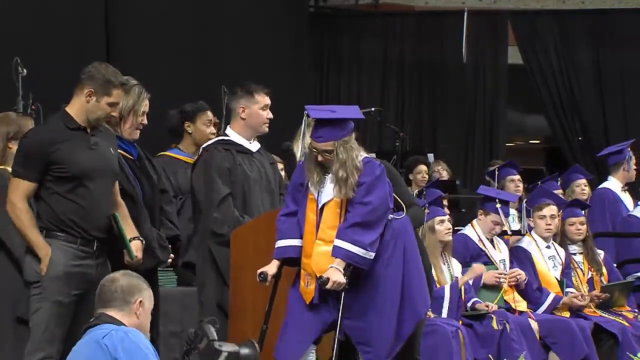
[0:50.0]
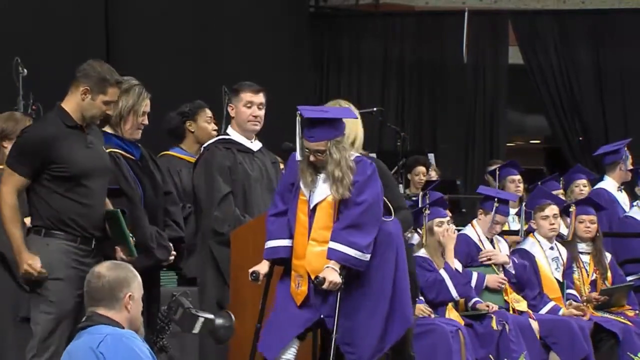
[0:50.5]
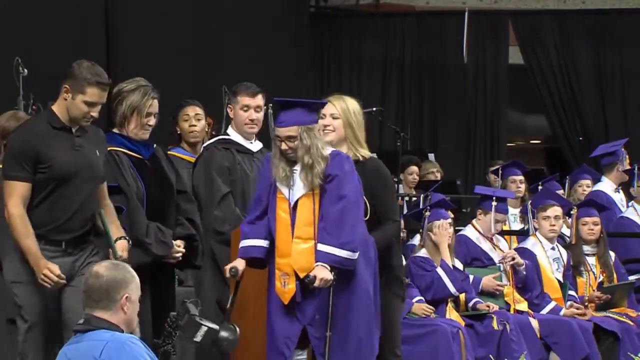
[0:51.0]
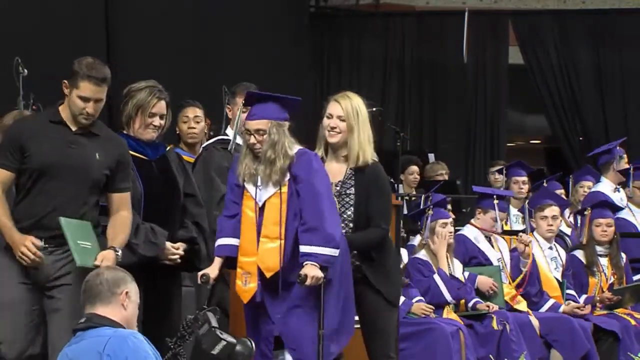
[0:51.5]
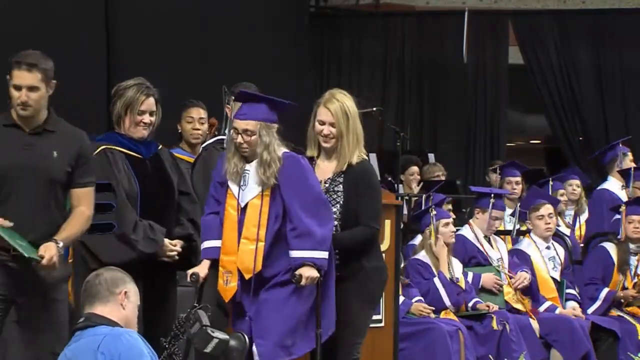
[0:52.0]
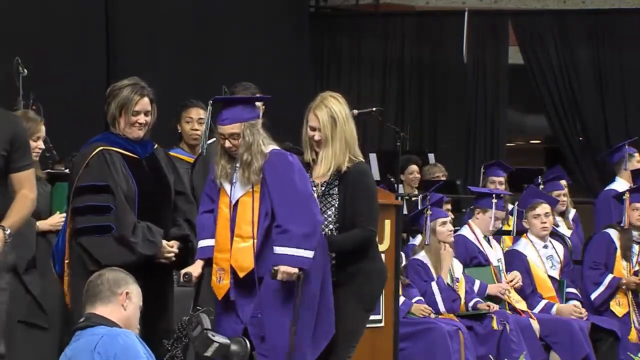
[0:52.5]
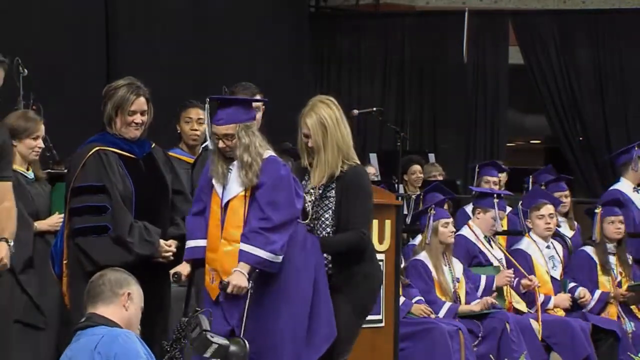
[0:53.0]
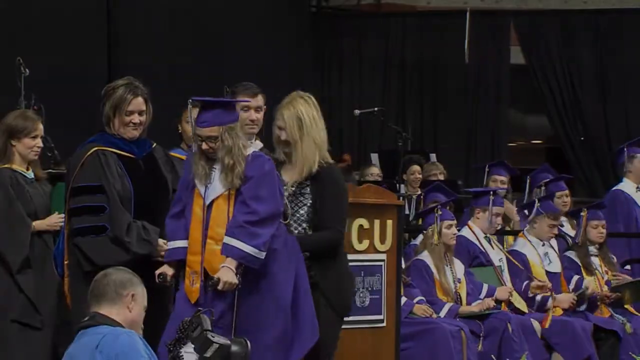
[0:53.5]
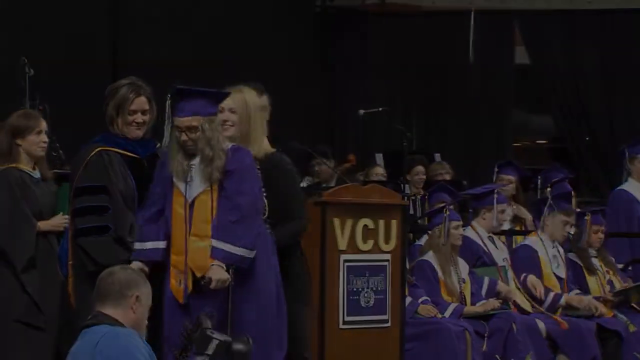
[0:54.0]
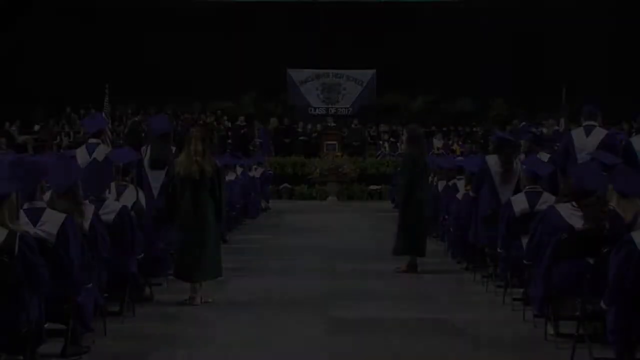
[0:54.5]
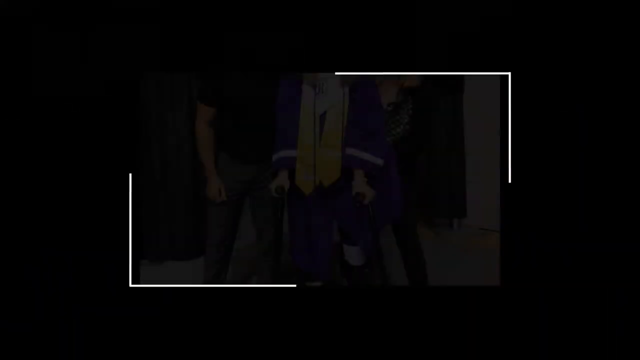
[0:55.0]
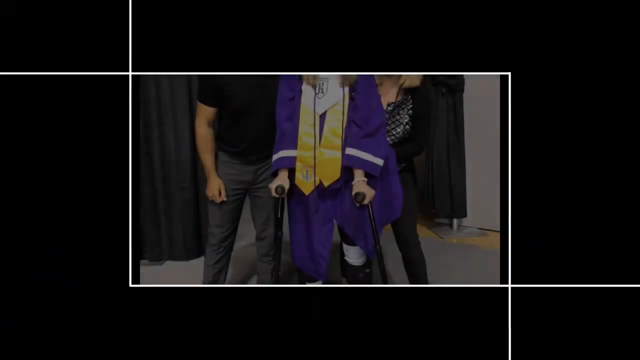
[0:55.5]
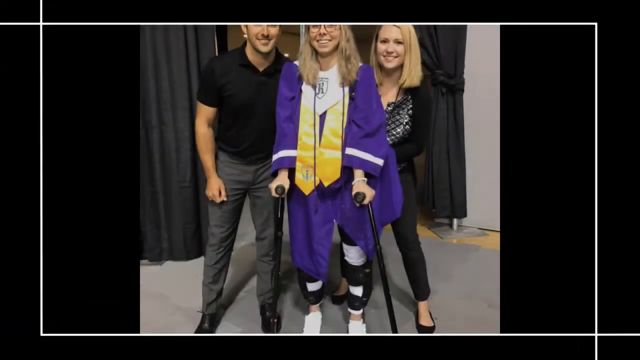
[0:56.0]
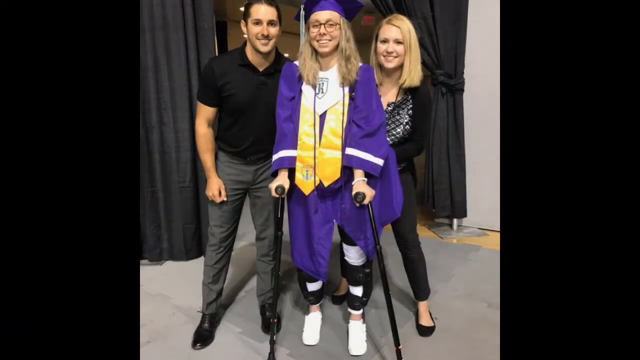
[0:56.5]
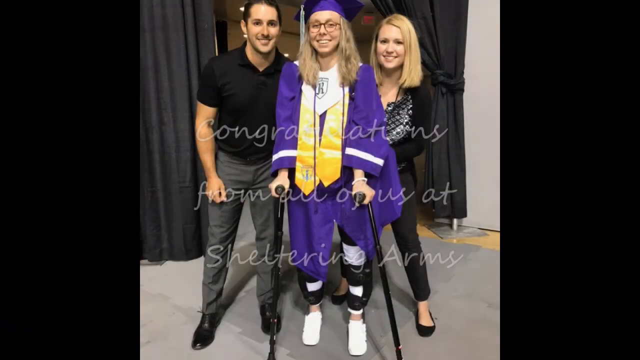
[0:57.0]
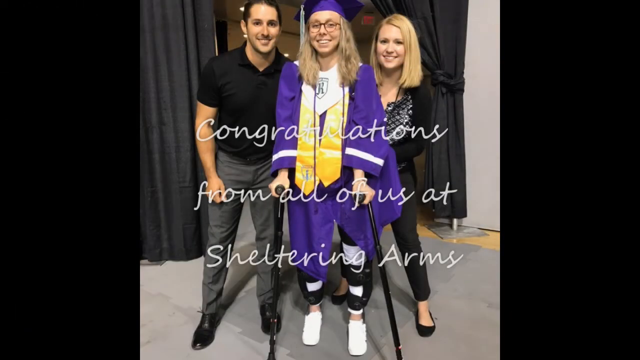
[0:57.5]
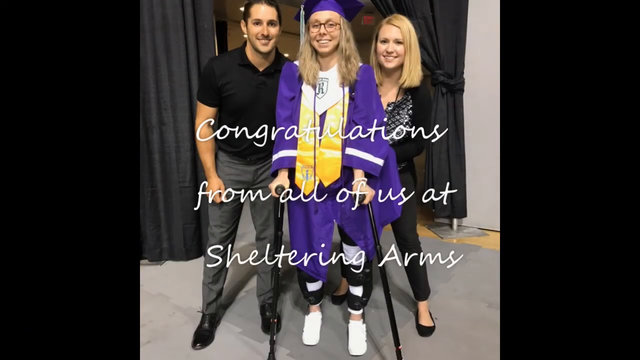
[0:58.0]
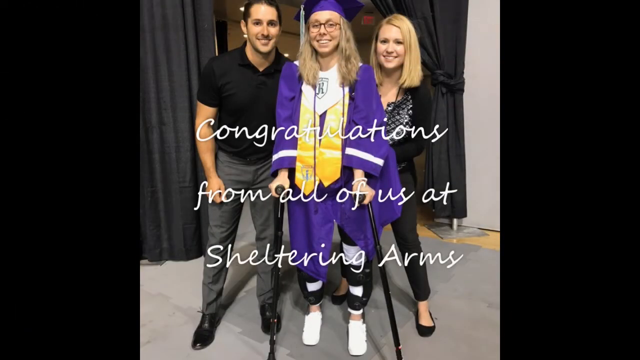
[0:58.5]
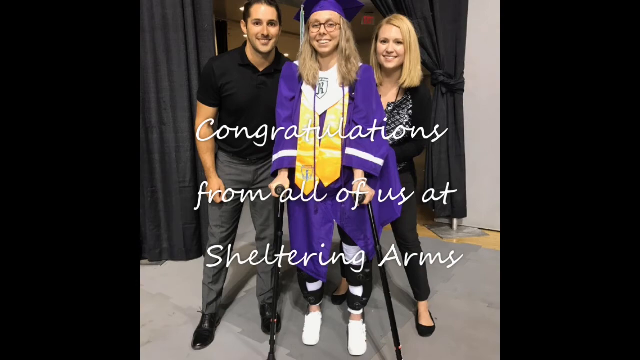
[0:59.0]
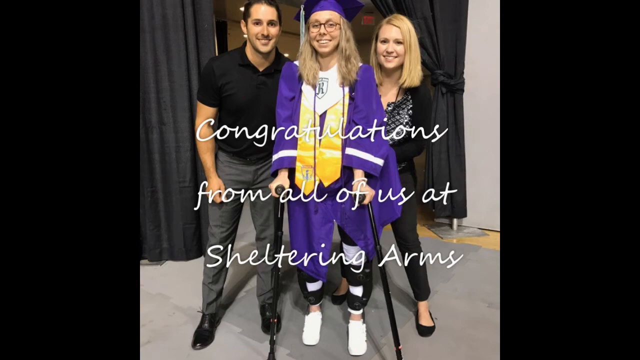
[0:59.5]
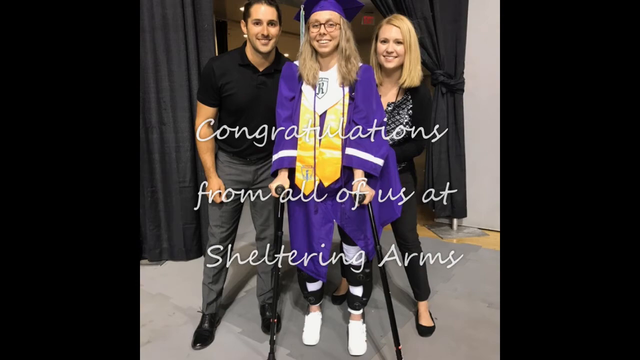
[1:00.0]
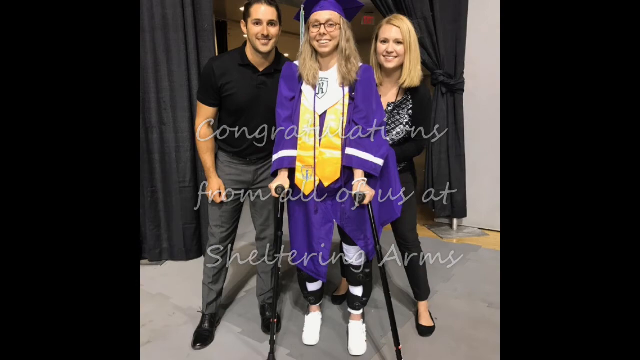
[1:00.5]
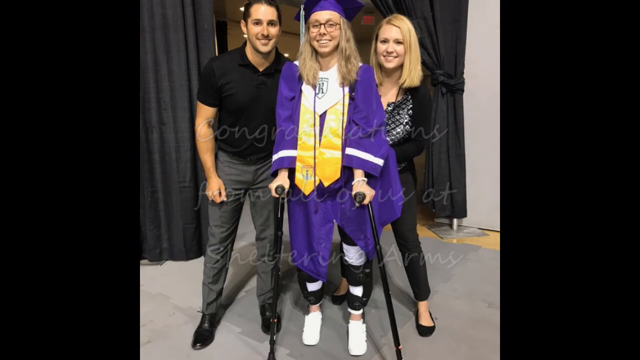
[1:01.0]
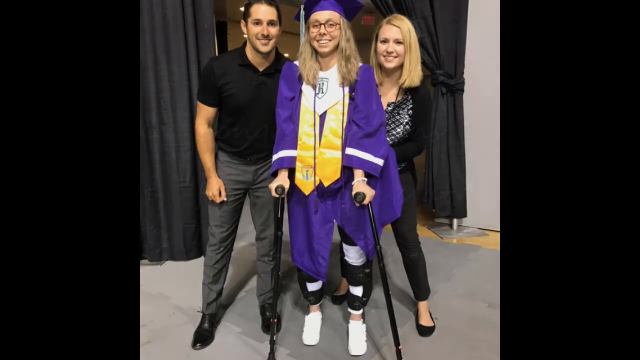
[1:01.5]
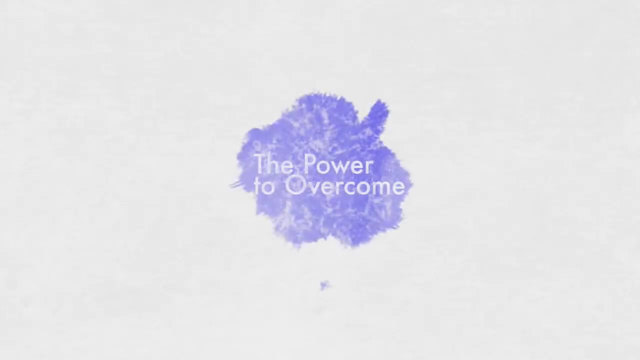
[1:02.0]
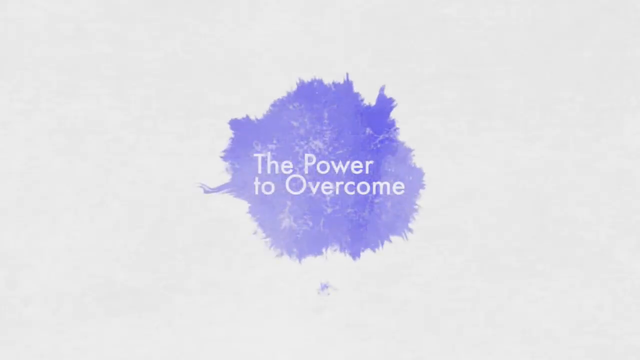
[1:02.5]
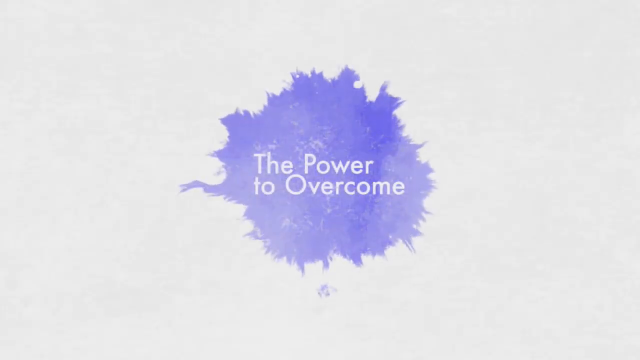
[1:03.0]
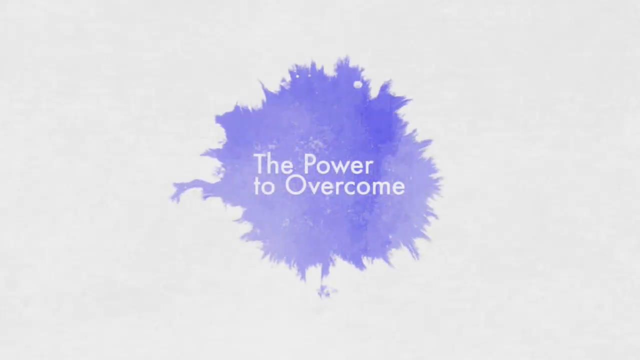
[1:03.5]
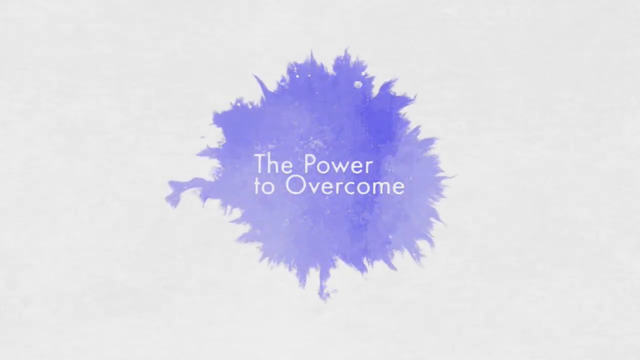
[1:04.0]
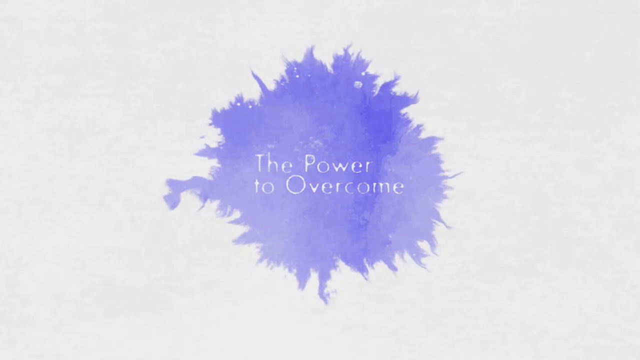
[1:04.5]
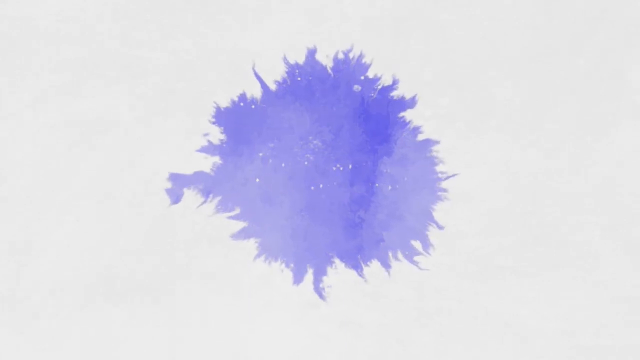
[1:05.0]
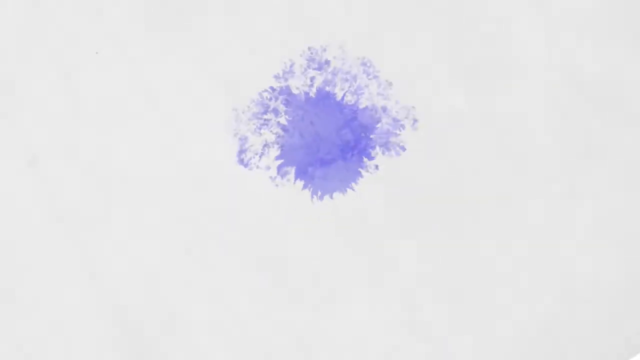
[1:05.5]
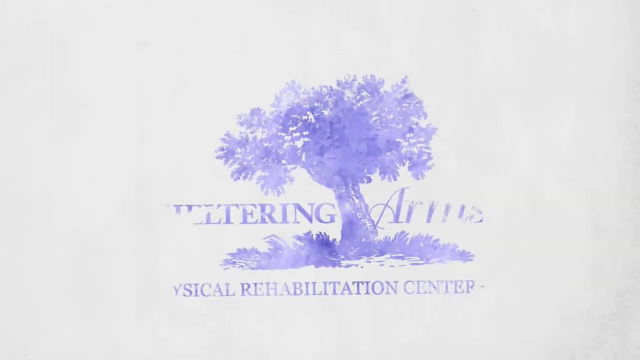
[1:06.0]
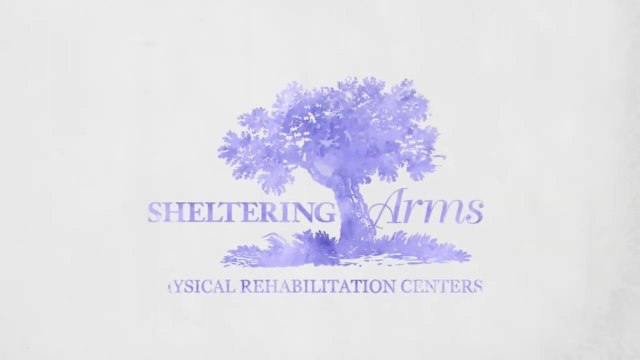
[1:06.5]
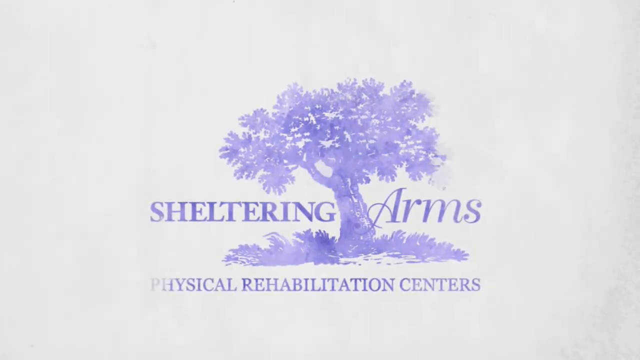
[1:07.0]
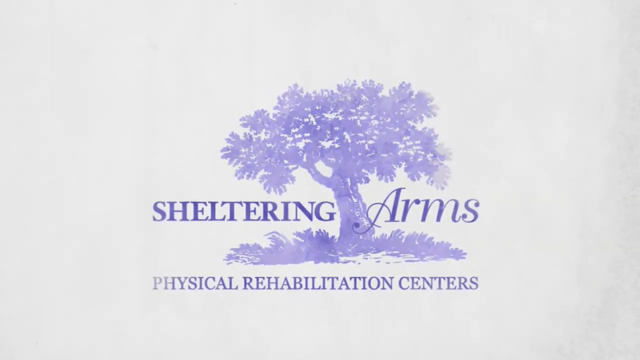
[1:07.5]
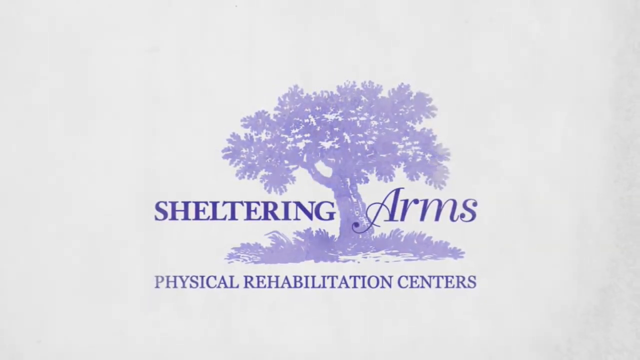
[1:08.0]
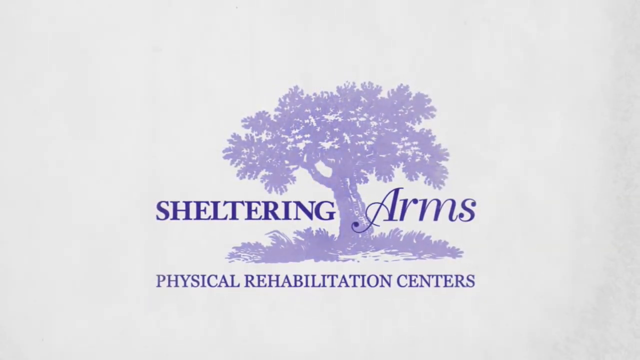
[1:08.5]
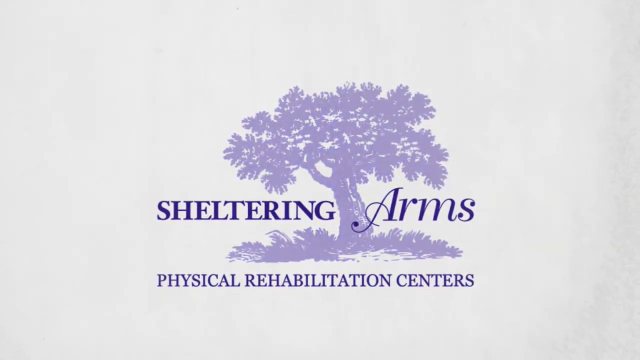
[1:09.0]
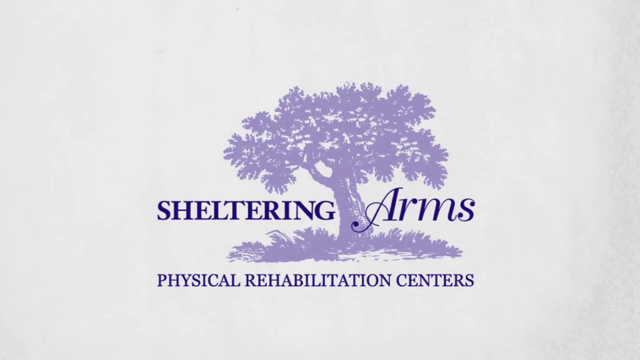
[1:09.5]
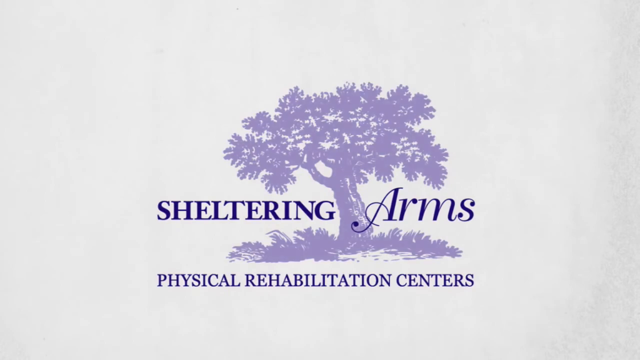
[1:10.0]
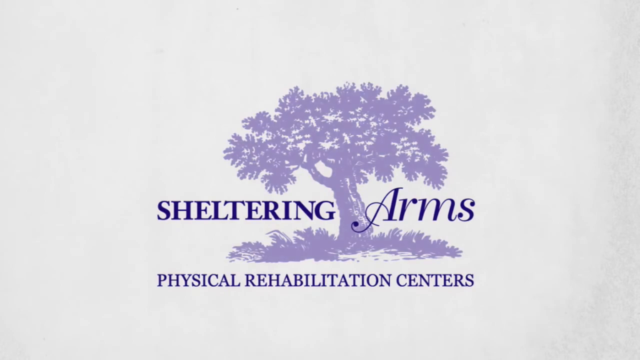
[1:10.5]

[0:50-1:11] A still picture shows the young woman with her mother and father beside her, and text reads "congratulations from all of us at Sheltering Arms."